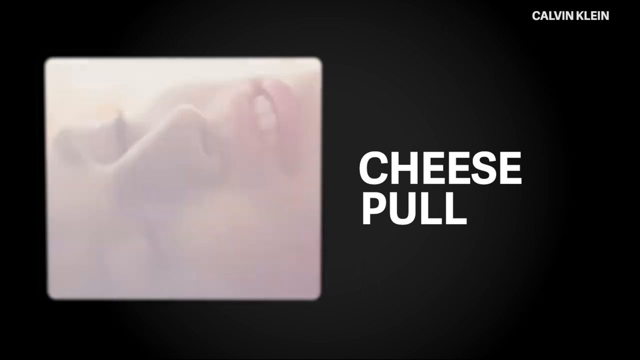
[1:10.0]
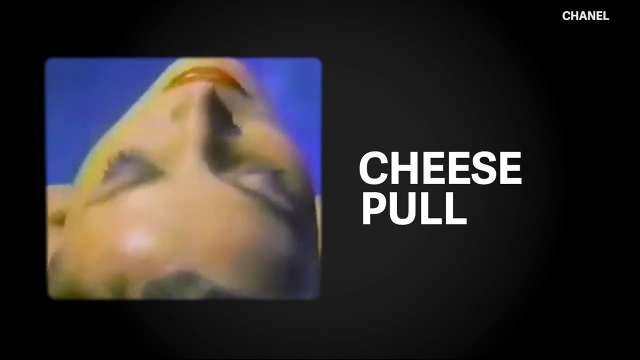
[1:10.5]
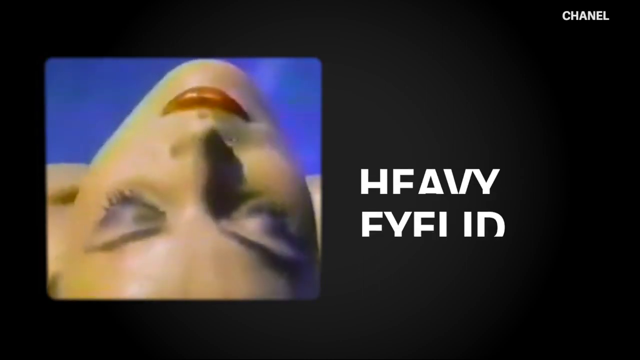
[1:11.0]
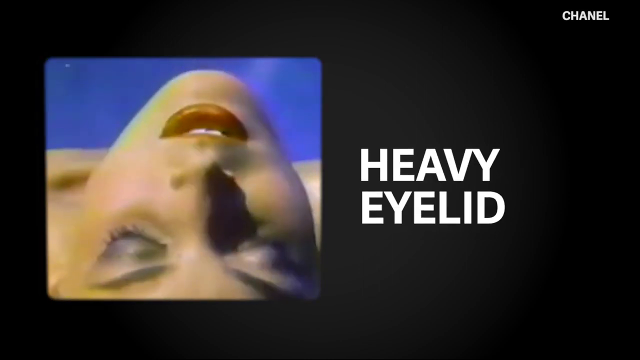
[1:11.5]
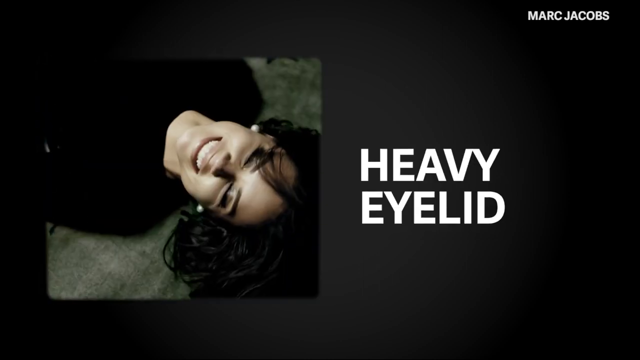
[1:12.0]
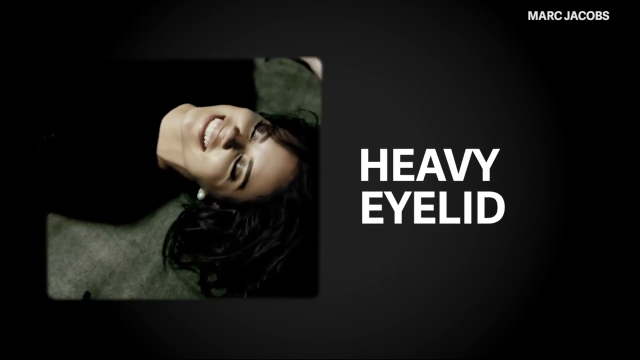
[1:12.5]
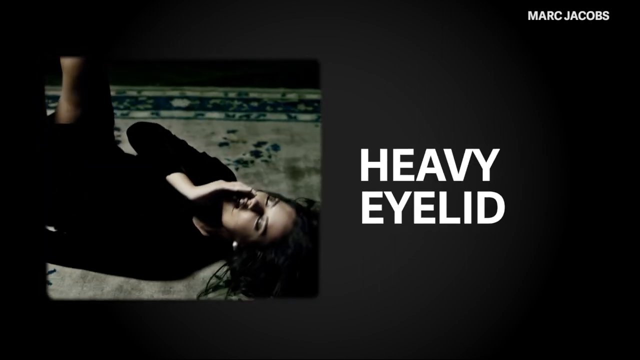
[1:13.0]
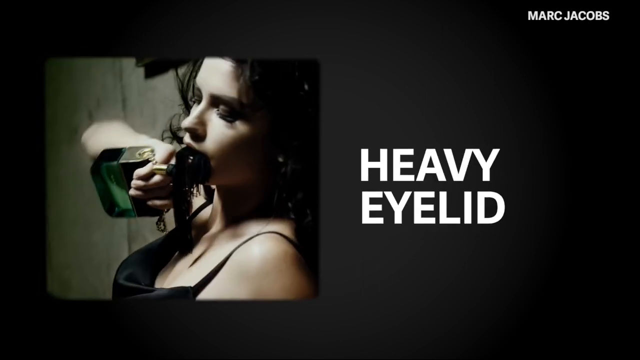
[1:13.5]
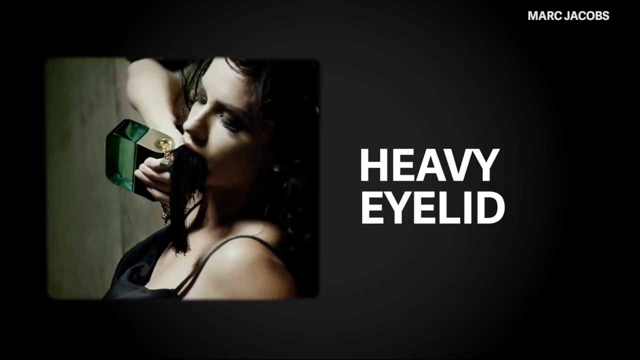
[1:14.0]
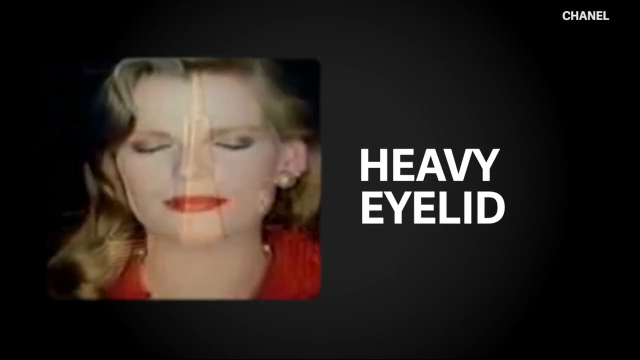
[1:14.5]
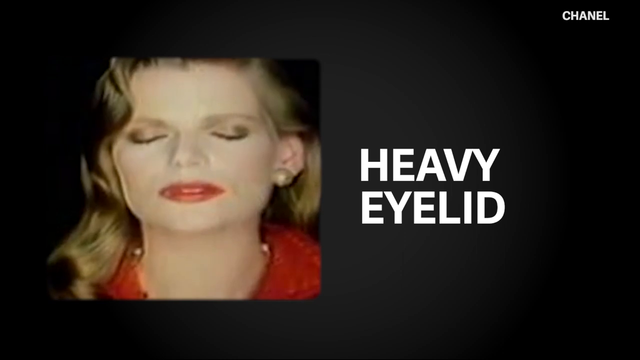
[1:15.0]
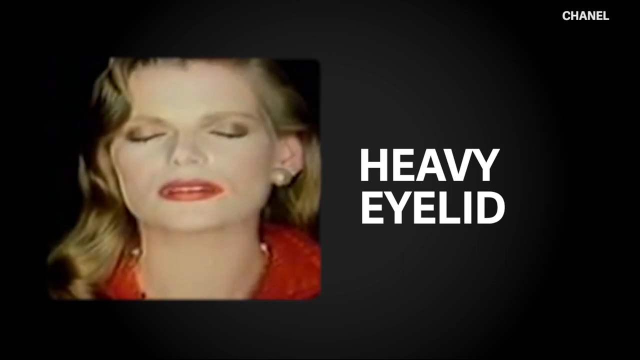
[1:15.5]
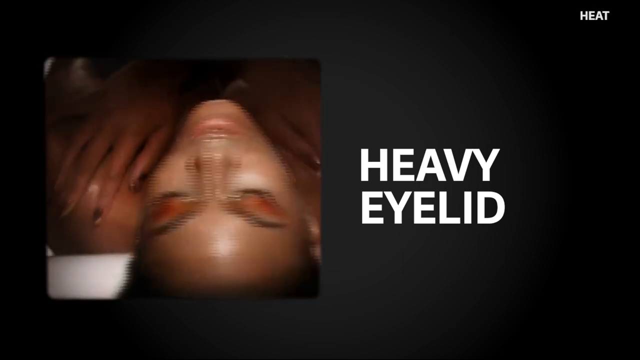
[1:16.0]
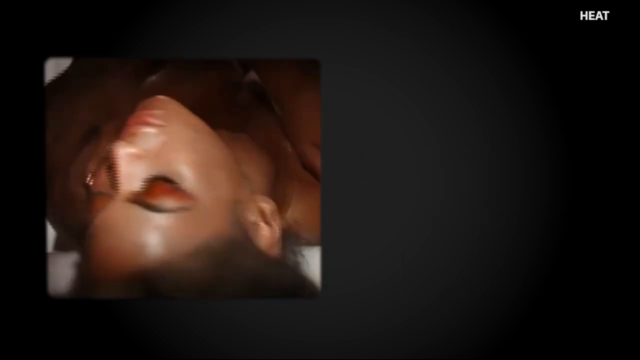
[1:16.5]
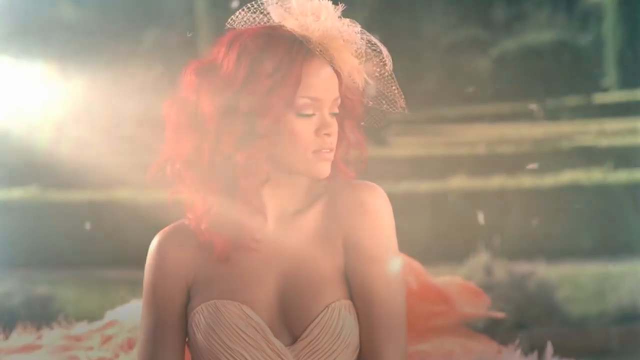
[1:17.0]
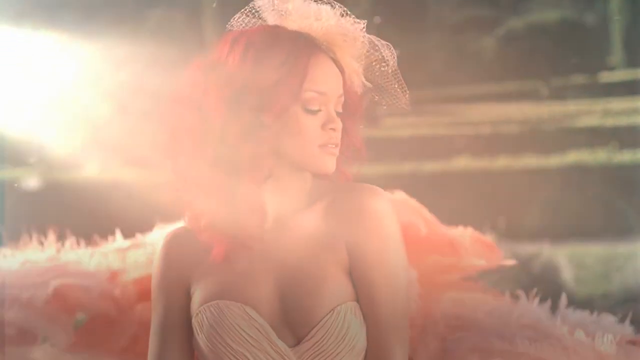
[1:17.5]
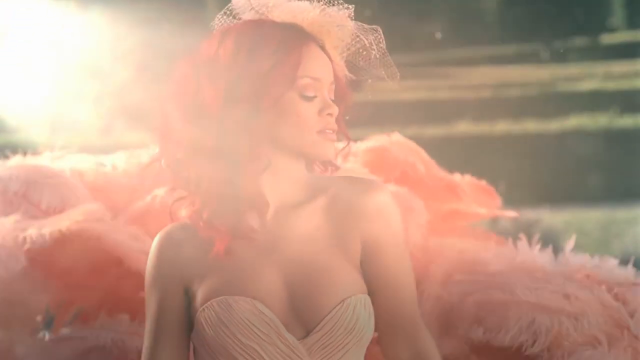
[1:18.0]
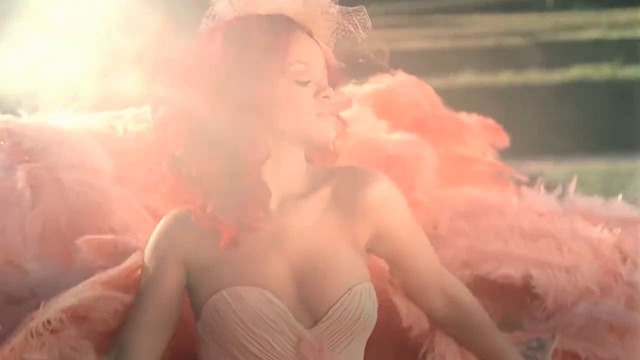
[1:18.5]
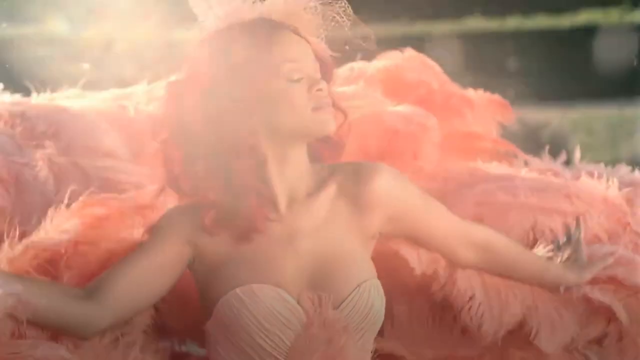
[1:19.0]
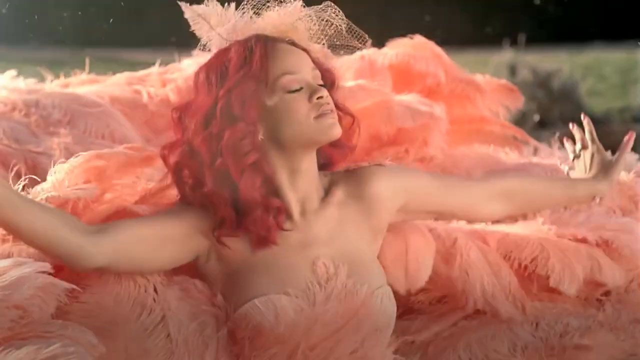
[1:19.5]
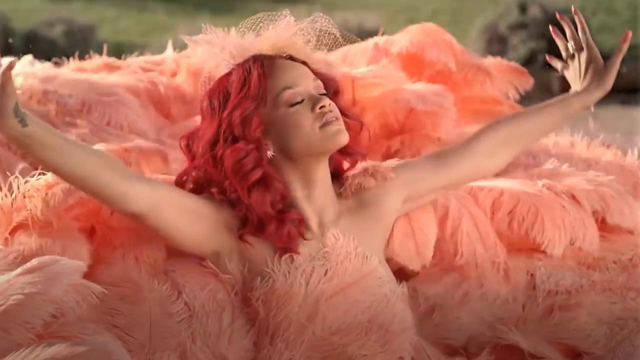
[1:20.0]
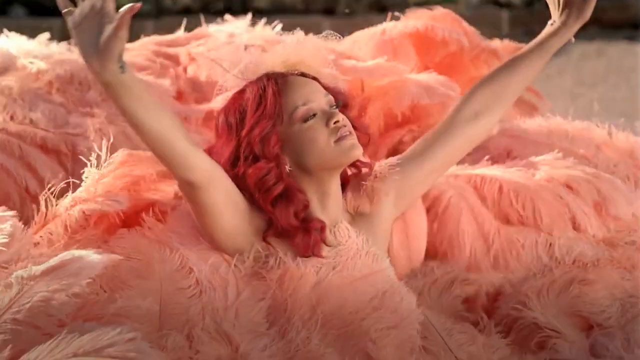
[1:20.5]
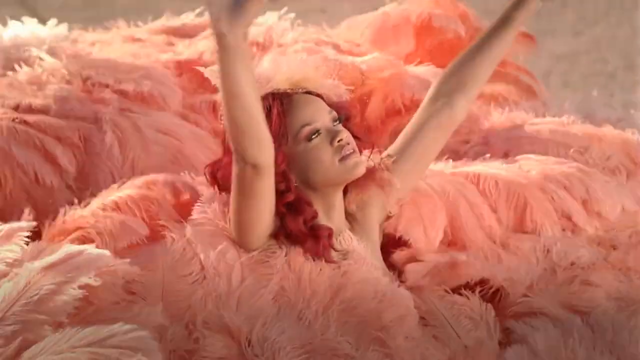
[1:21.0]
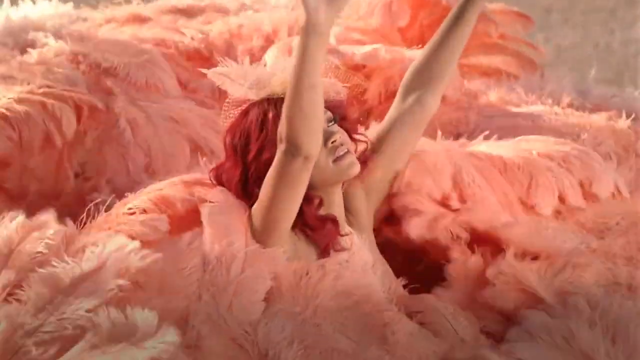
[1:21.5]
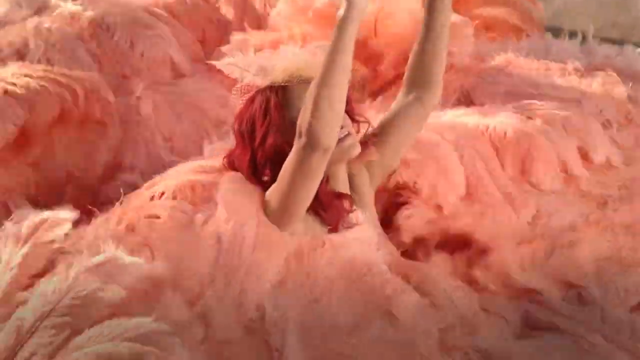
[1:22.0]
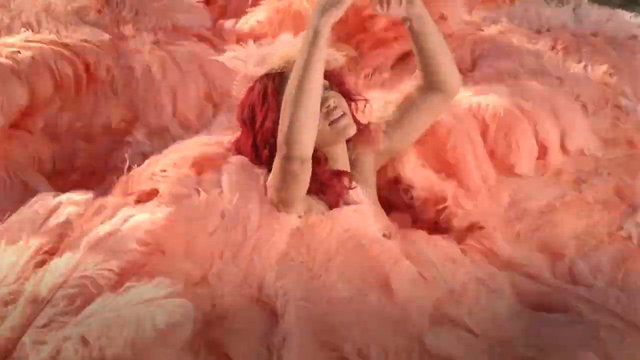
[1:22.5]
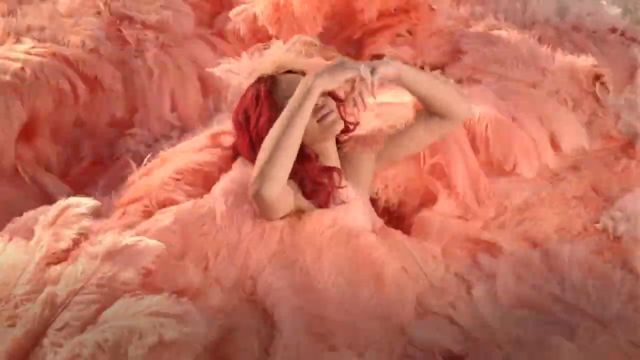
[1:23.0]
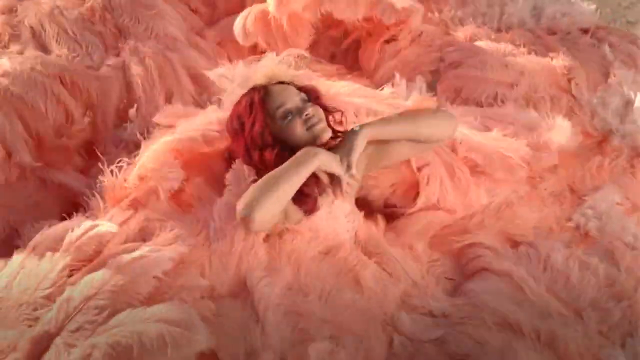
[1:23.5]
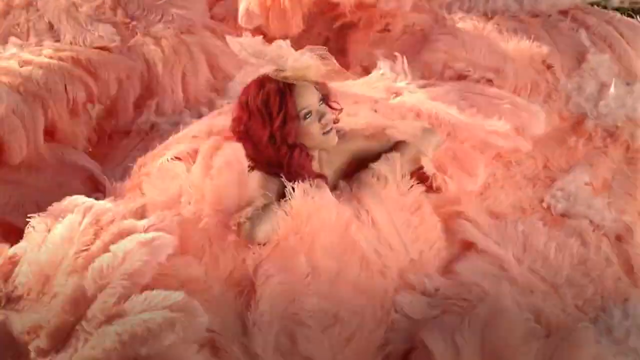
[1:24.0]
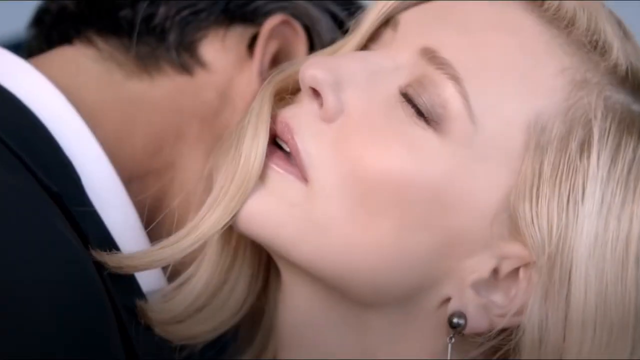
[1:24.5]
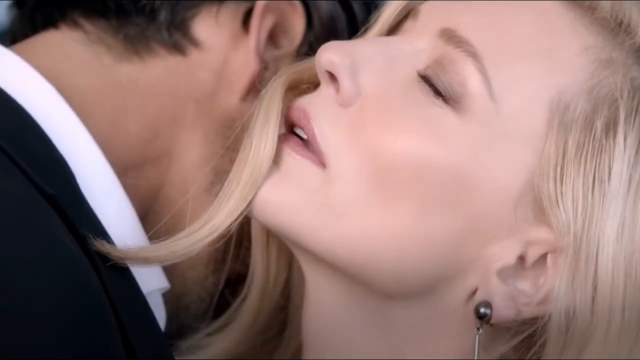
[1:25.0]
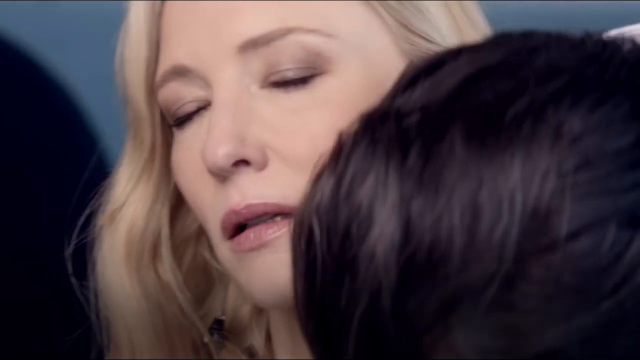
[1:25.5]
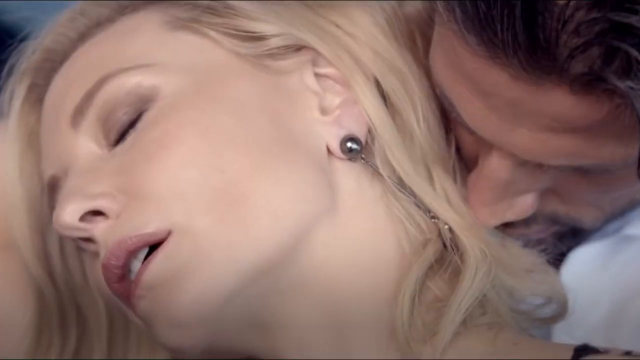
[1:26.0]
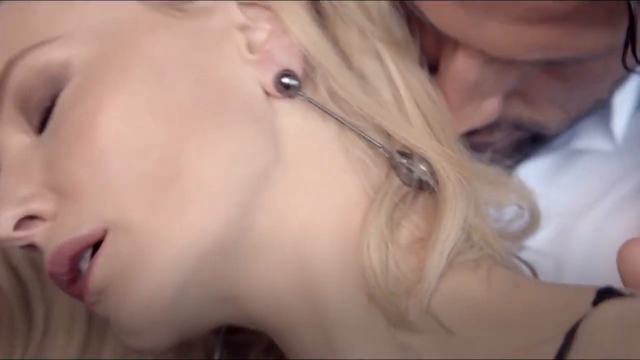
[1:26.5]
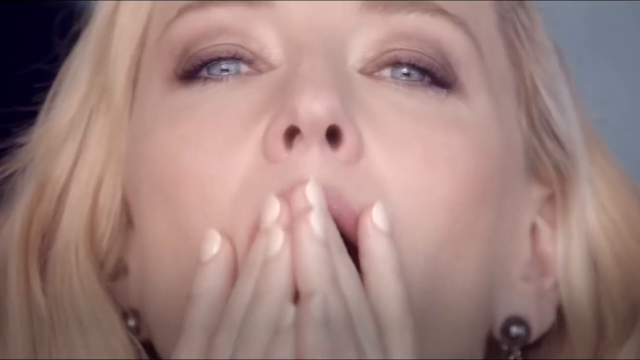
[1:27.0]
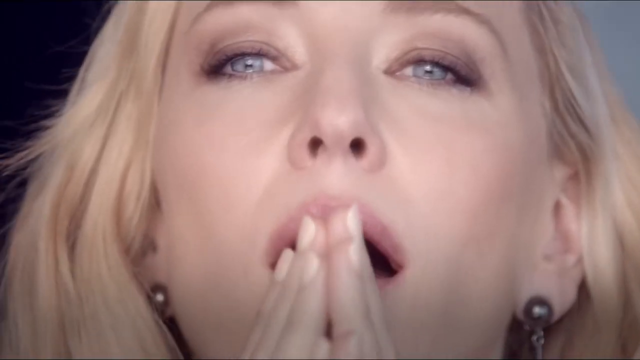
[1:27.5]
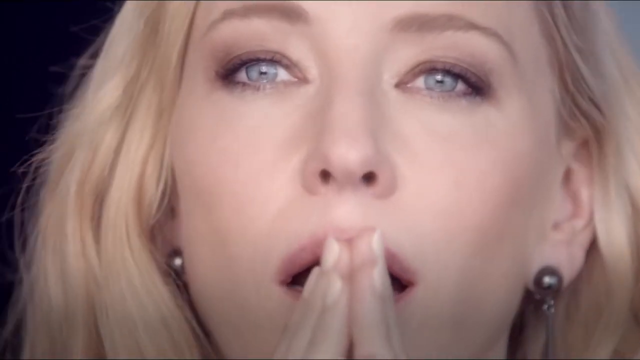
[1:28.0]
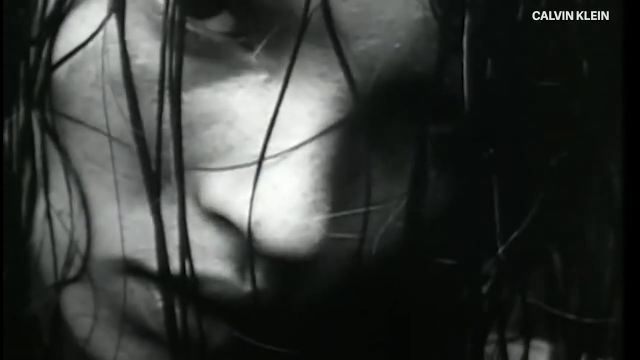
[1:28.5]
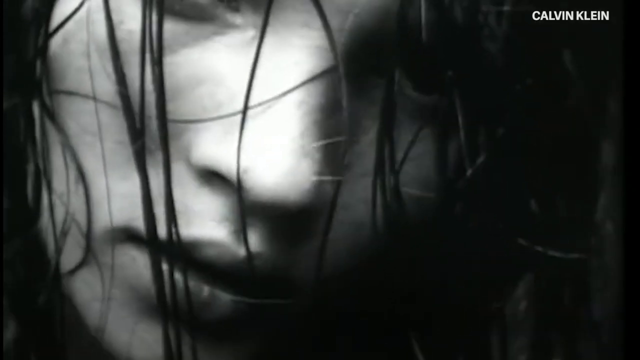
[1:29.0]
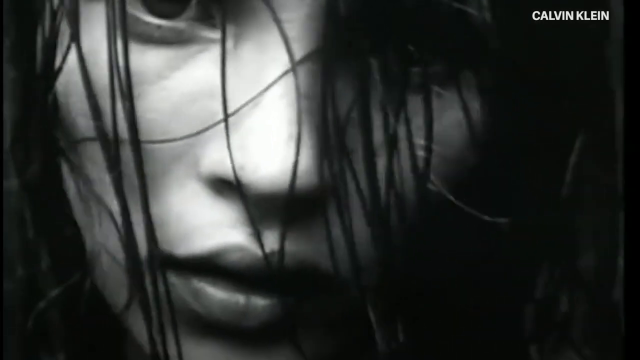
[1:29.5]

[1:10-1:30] In the upper right-hand corner, white capital letters read "Calvin Klein." On the right side, bold white capital letters read "cheese pull," with "pull" beneath "cheese." Then text reads "heavy eyelid," and the video turns black and white. The heavy eyelid segment is apparently from Marc Jacobs: a singer holds a bottle that is green at the bottom and has black eyelids, like some of the rest of the bottle and her dress.